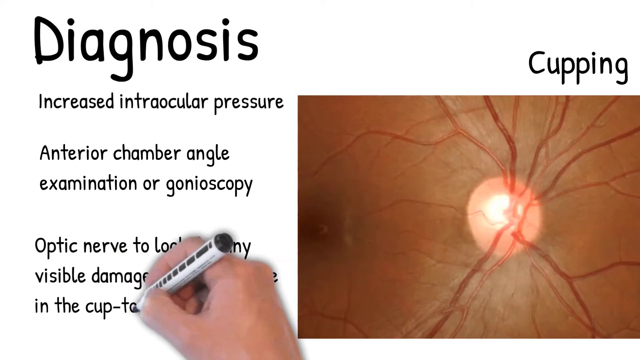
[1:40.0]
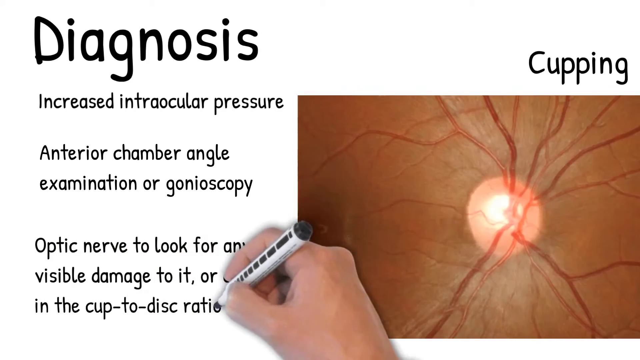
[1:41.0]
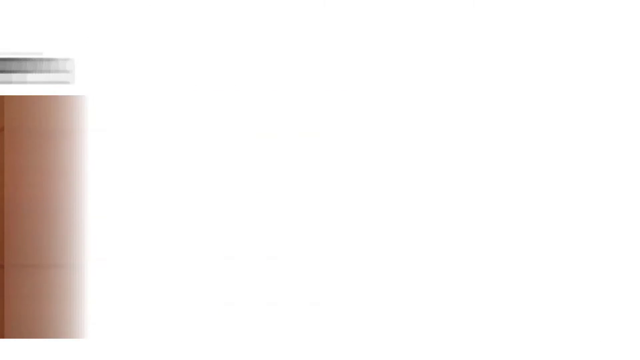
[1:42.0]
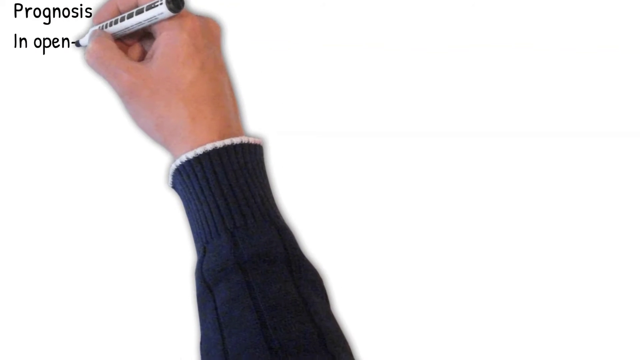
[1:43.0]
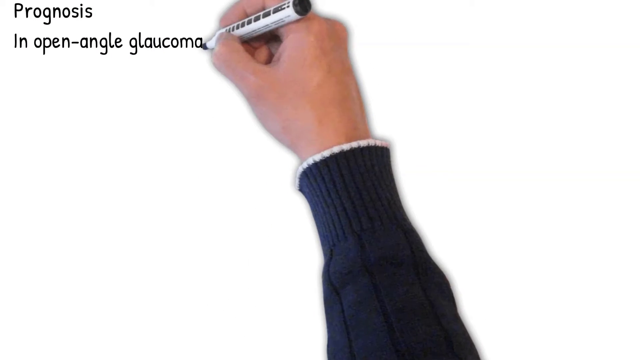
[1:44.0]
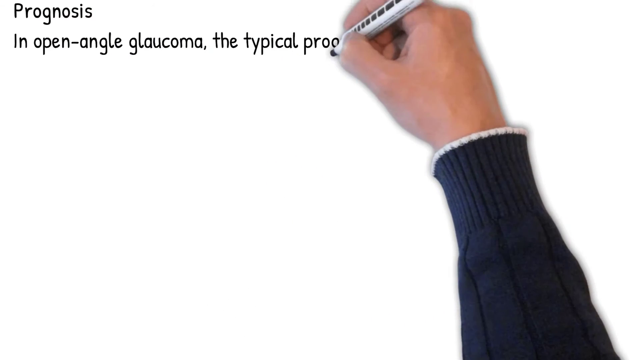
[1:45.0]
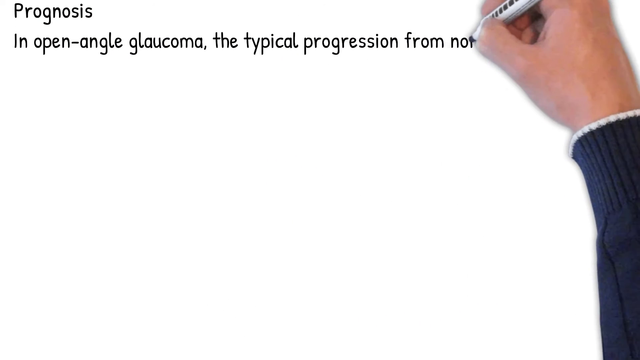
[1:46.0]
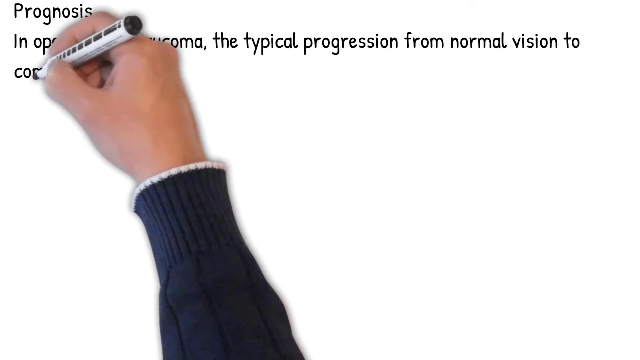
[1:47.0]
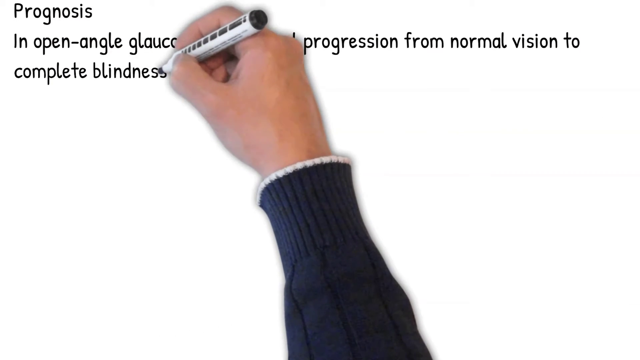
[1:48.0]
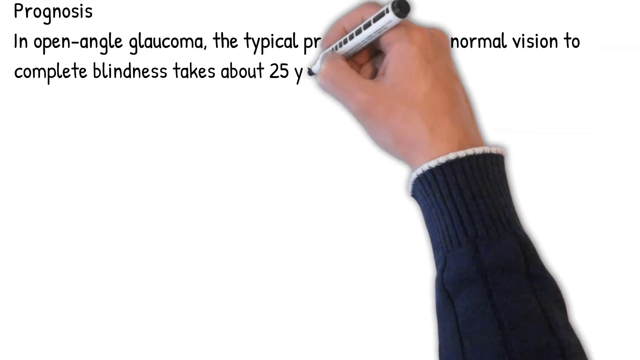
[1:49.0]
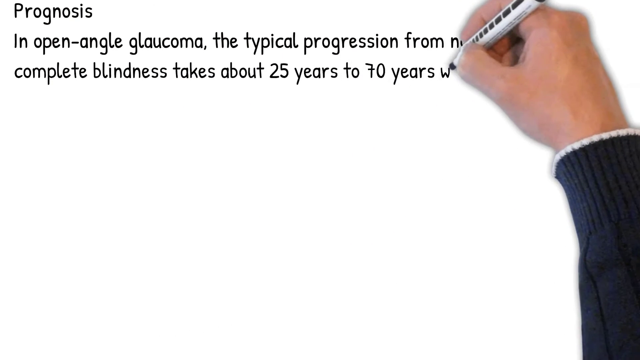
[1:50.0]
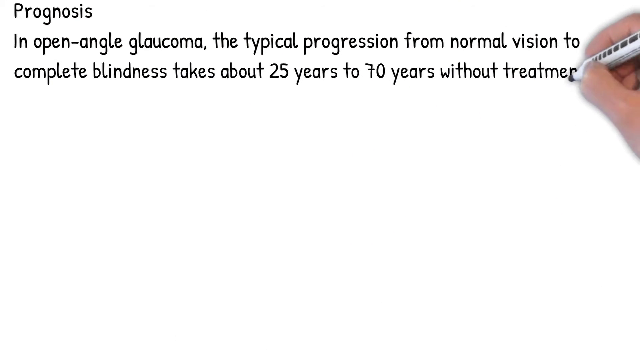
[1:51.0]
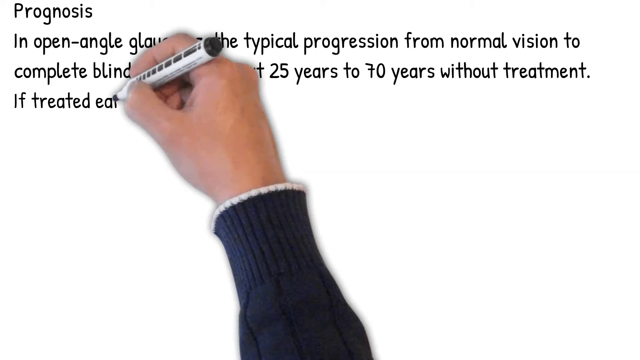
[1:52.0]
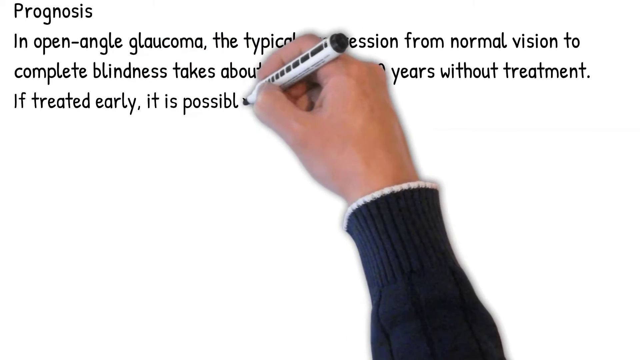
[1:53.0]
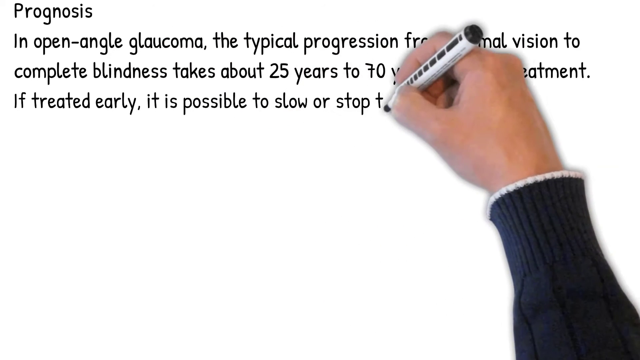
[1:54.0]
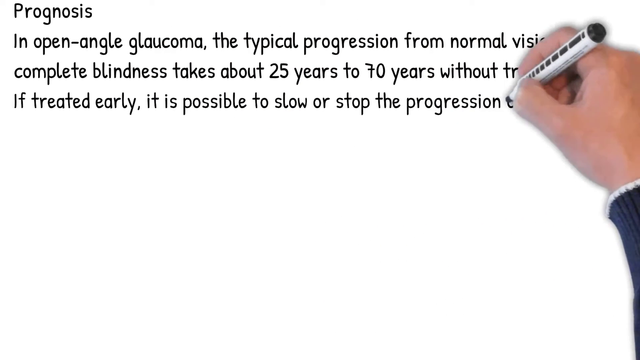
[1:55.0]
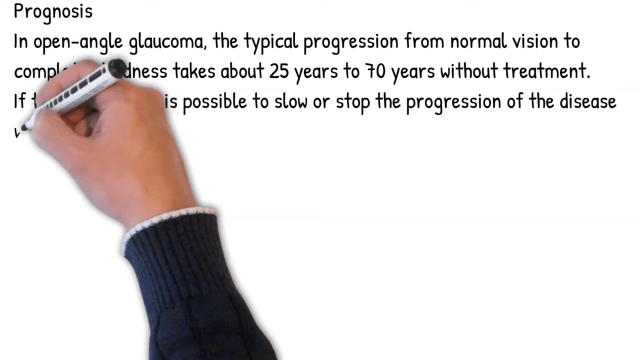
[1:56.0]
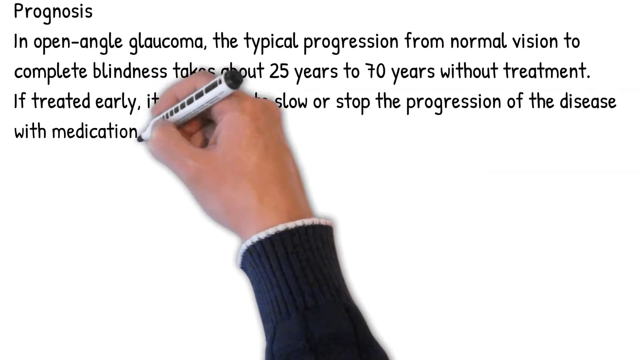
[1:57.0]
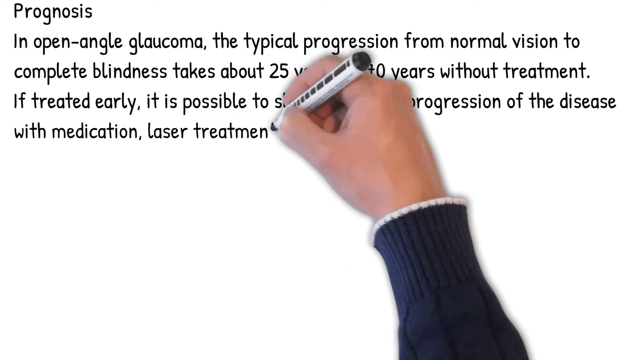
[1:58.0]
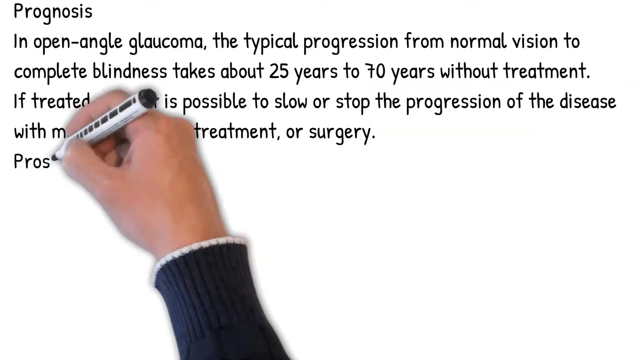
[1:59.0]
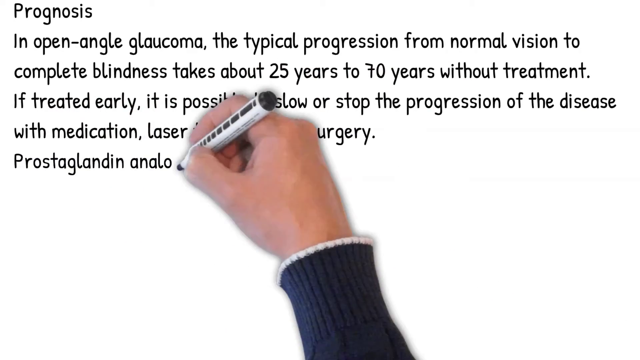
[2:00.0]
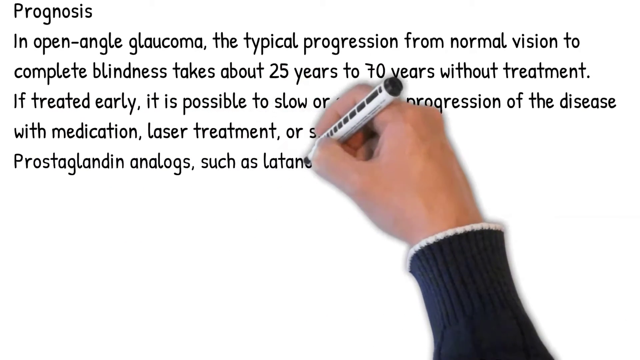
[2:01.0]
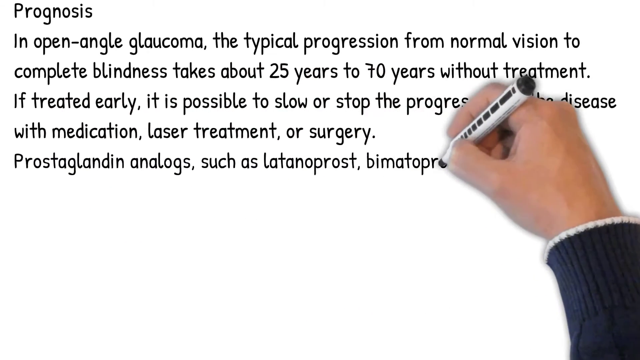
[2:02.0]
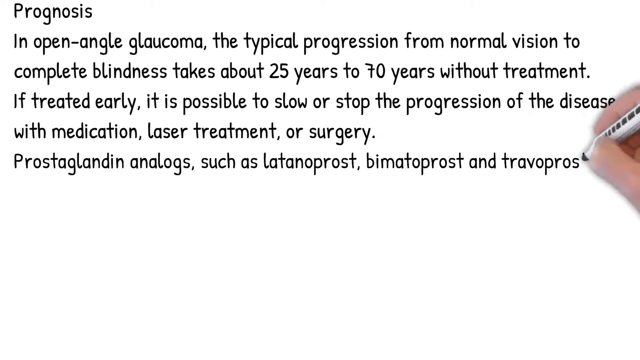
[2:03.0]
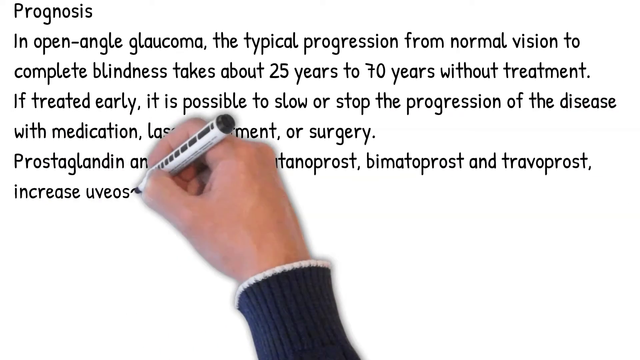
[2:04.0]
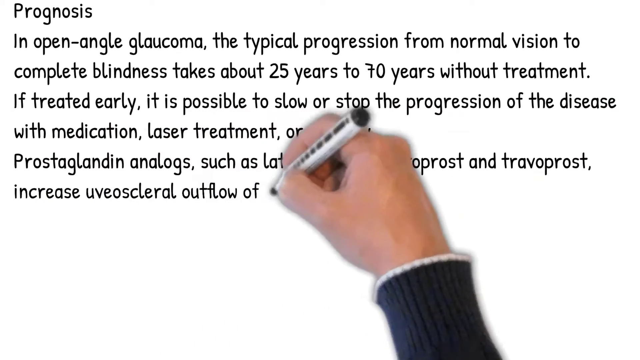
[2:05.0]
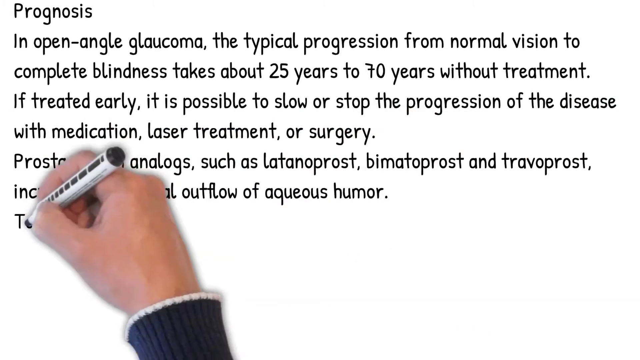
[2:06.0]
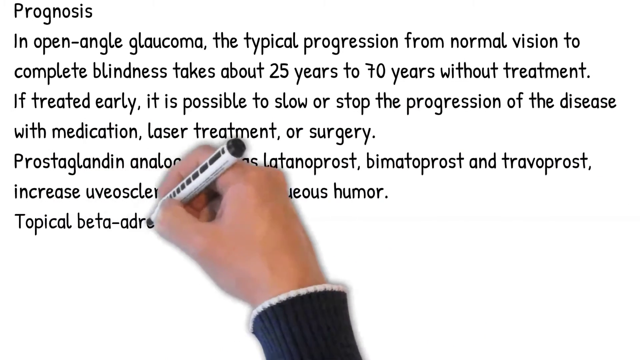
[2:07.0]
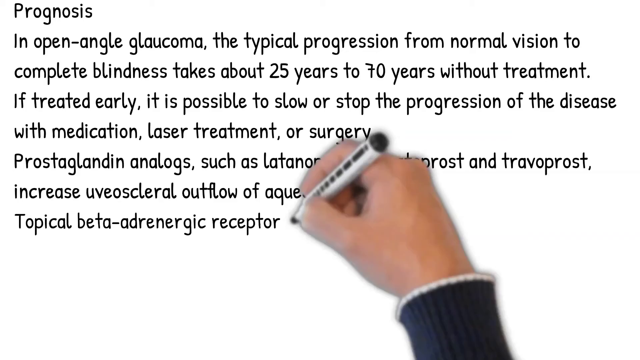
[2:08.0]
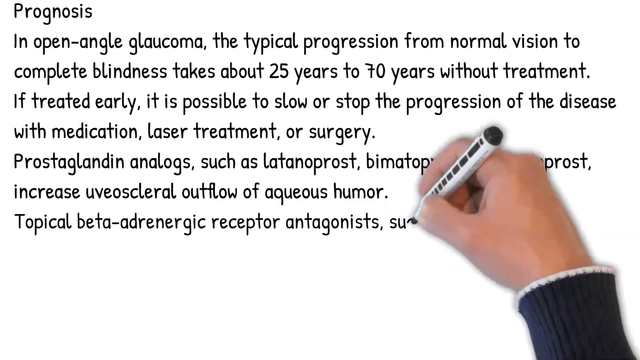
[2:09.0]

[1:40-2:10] A new page begins. From the top left corner, the white male hand with a white-trimmed blue sleeve writes in black pen from left to right: "Prognosis in open angle glaucoma, the typical progression from normal vision to complete blindness takes about 25 years to 70 years without treatment. If treated early, it is possible to slow or stop the progression of the disease with medication, laser treatment or surgery." It continues with "Prostaglandin analogs such as latanoprost", followed by text about the outflow of aqueous humor and topical beta receptor antagonists. The page is about the prognosis for patients with glaucoma. The whole page is written in a black, handwriting-style font, and there are three paragraphs breaking down the information. By the end the pen is running out of space on the page, but the page is not yet completely full.